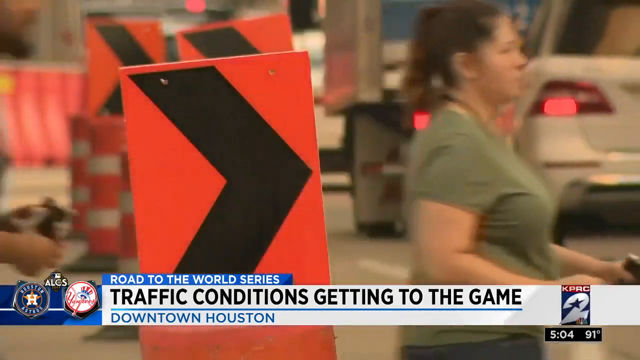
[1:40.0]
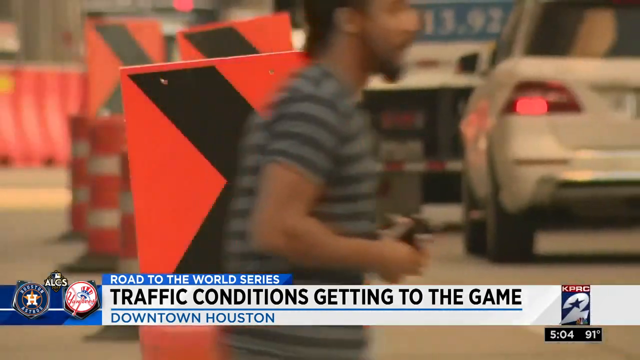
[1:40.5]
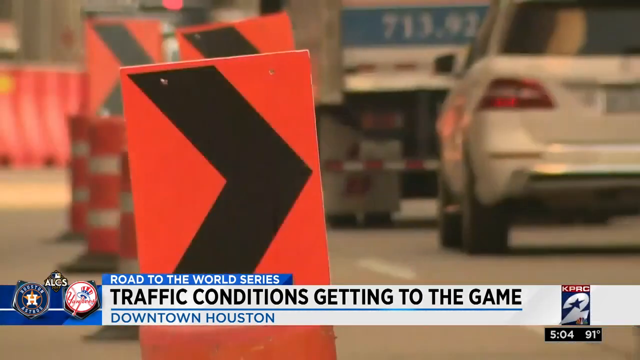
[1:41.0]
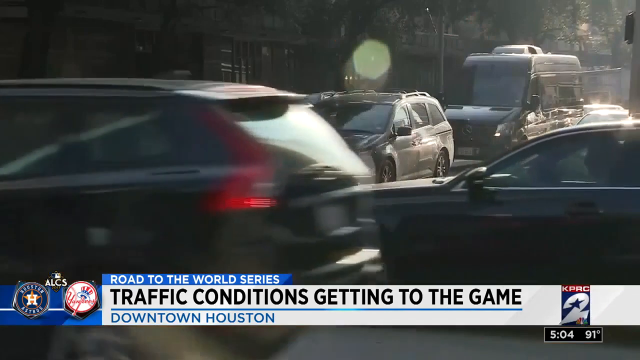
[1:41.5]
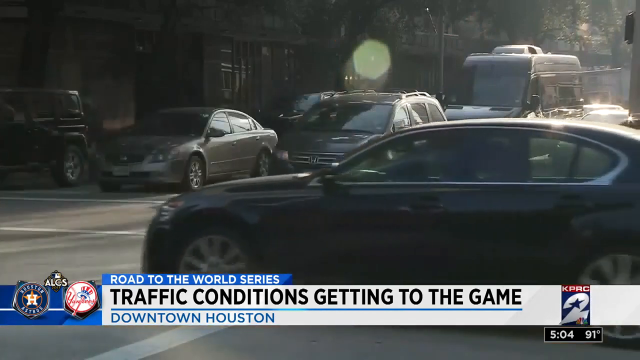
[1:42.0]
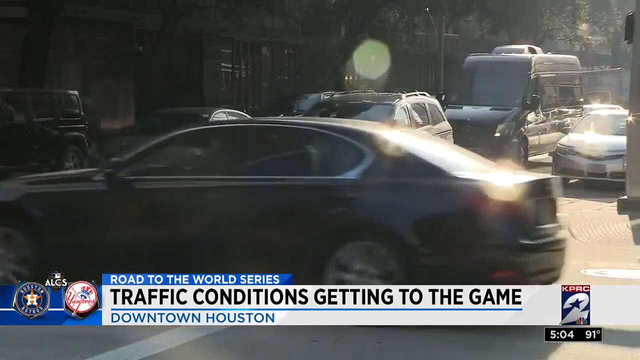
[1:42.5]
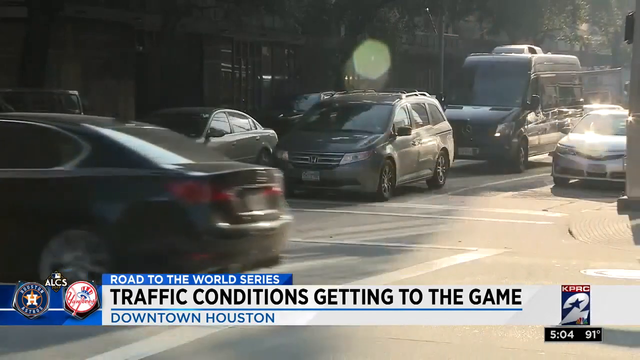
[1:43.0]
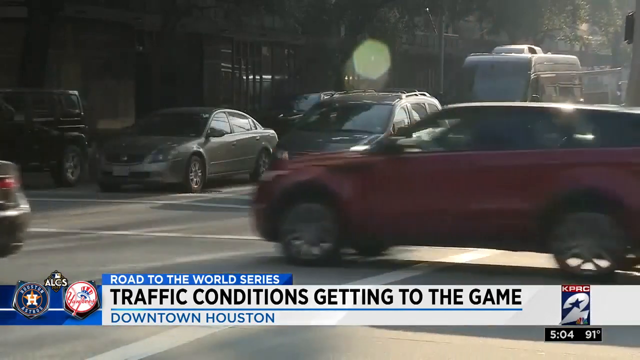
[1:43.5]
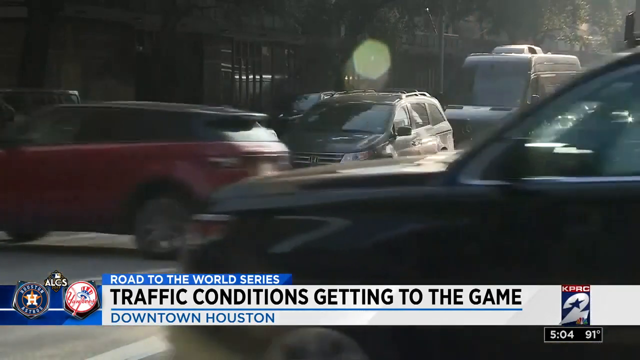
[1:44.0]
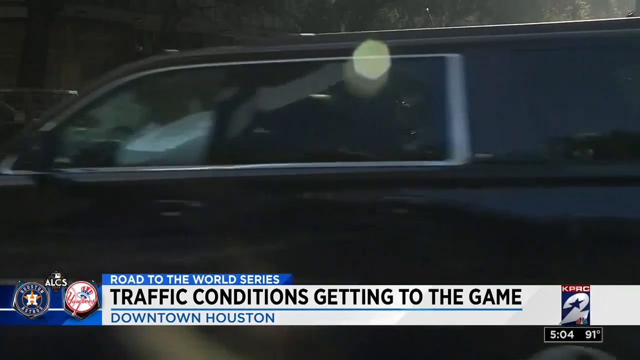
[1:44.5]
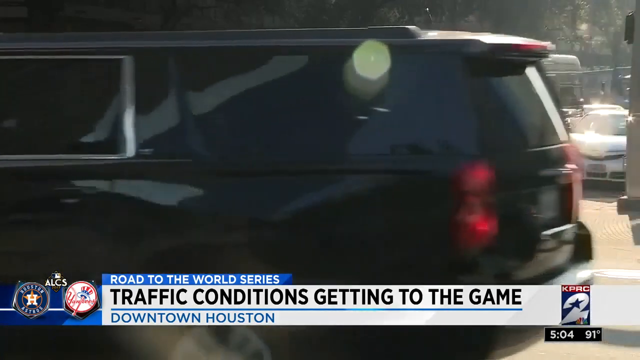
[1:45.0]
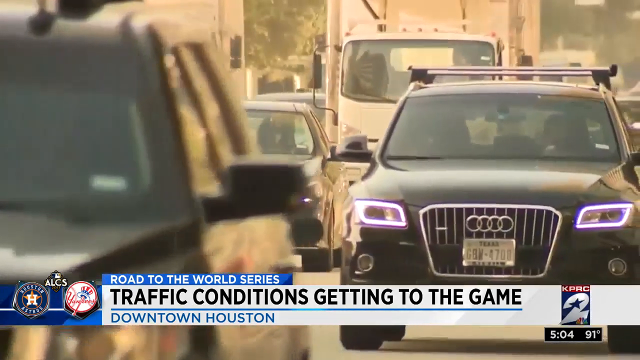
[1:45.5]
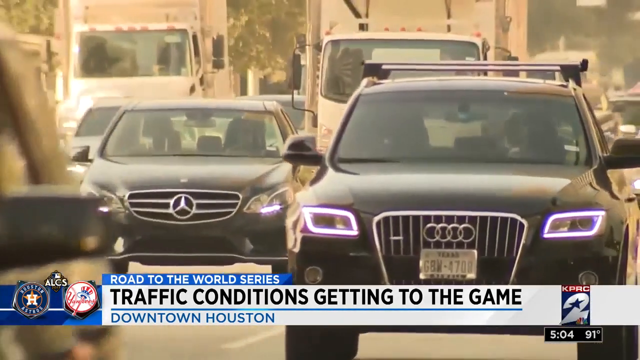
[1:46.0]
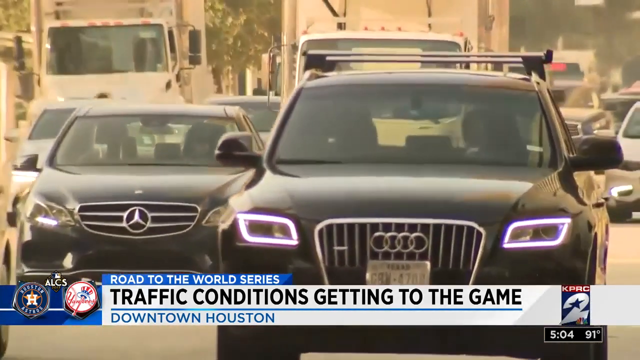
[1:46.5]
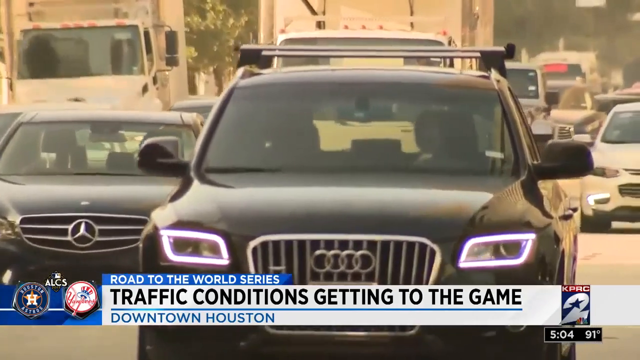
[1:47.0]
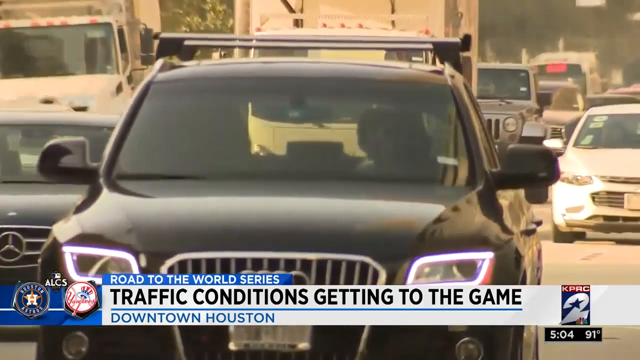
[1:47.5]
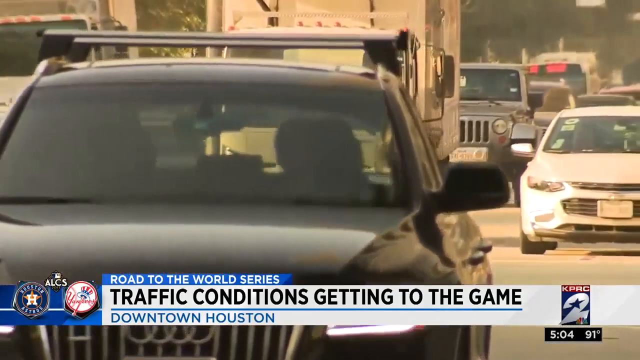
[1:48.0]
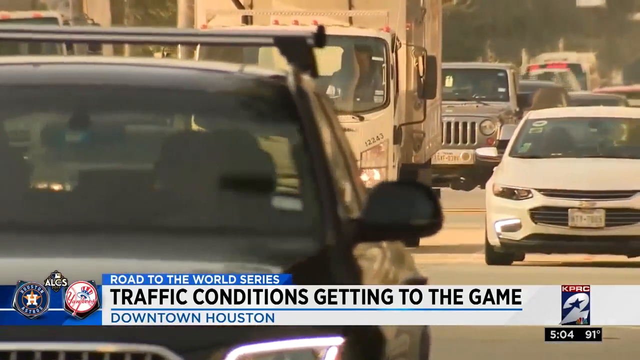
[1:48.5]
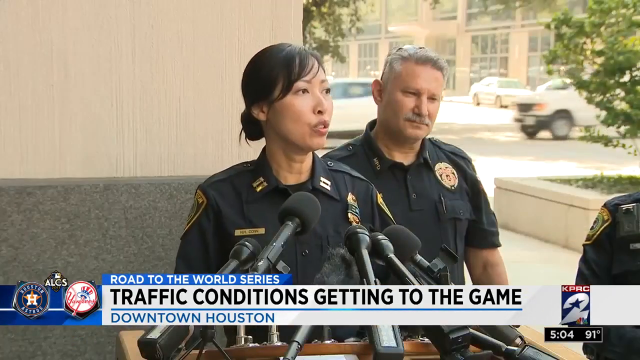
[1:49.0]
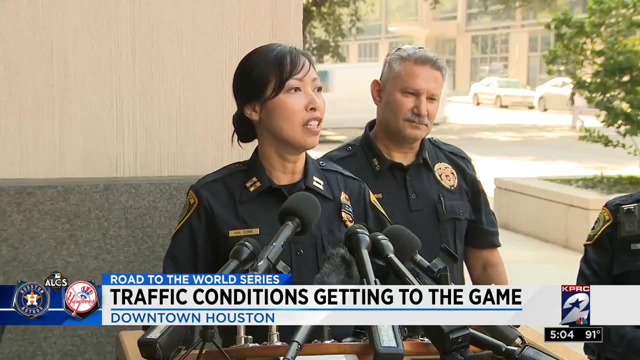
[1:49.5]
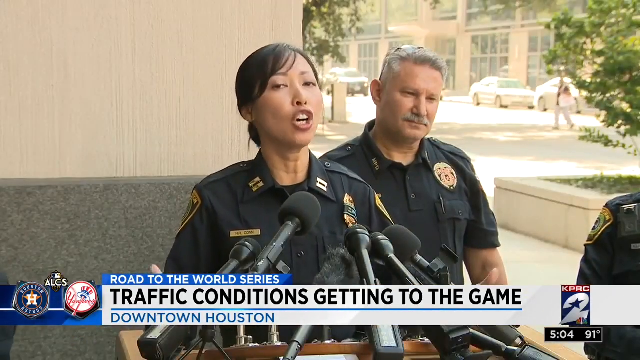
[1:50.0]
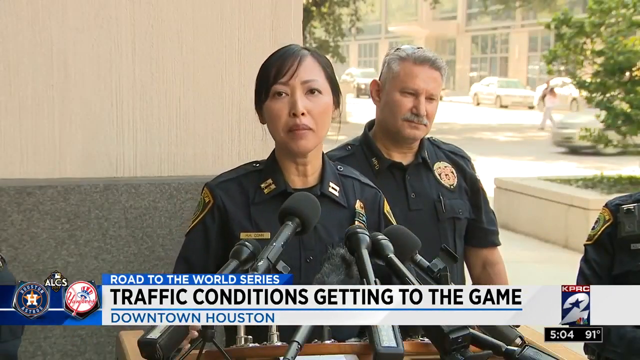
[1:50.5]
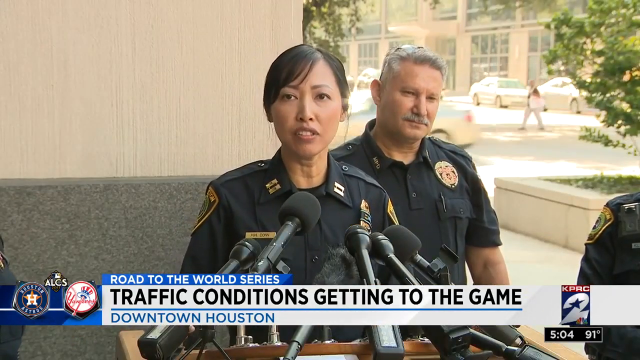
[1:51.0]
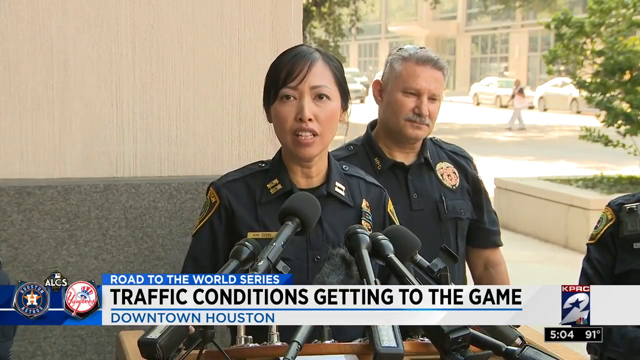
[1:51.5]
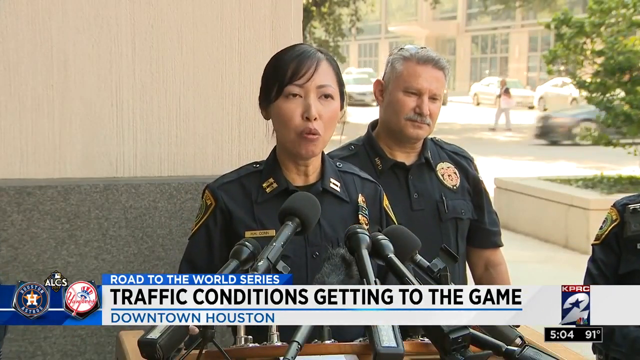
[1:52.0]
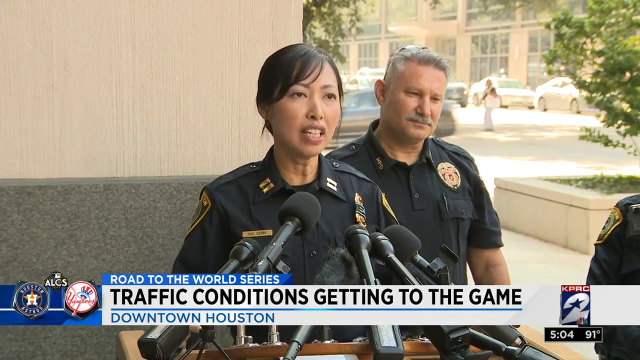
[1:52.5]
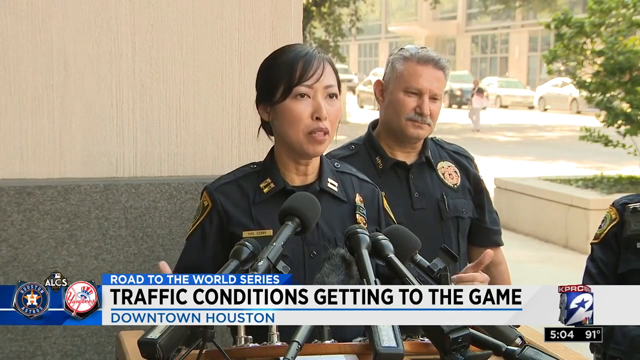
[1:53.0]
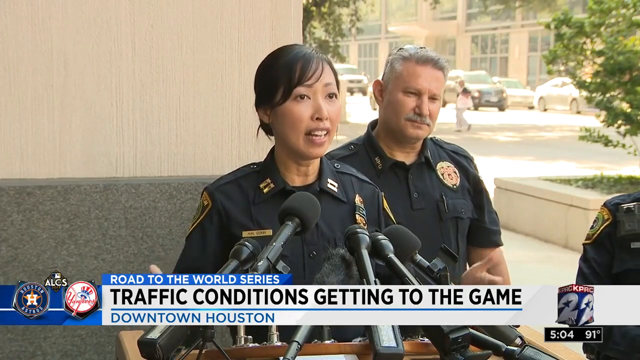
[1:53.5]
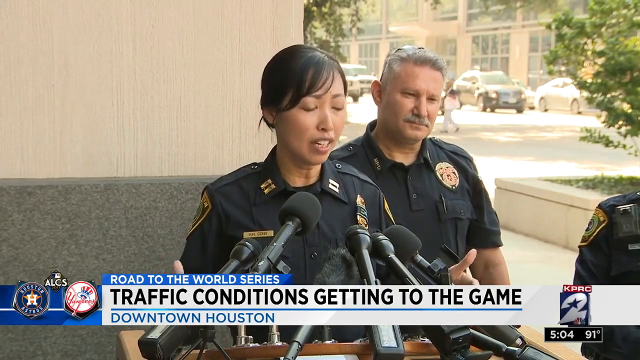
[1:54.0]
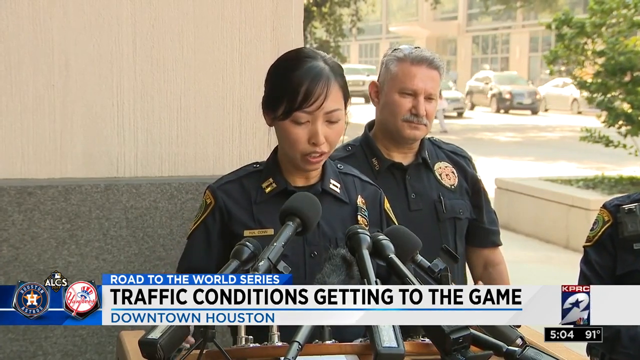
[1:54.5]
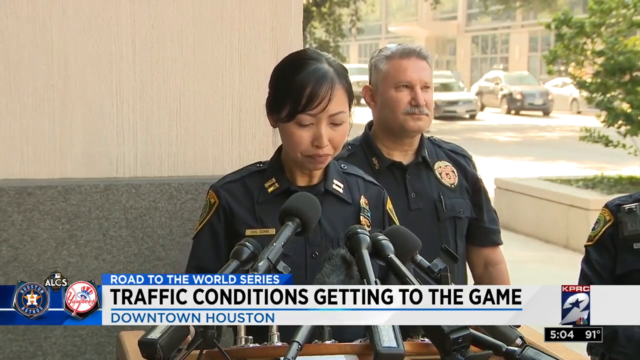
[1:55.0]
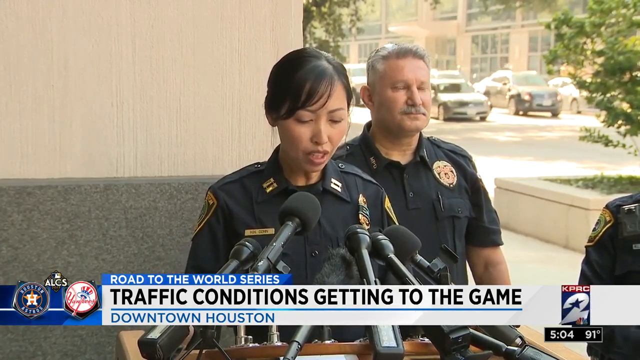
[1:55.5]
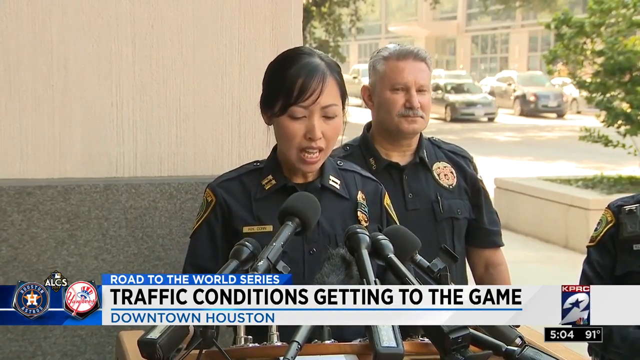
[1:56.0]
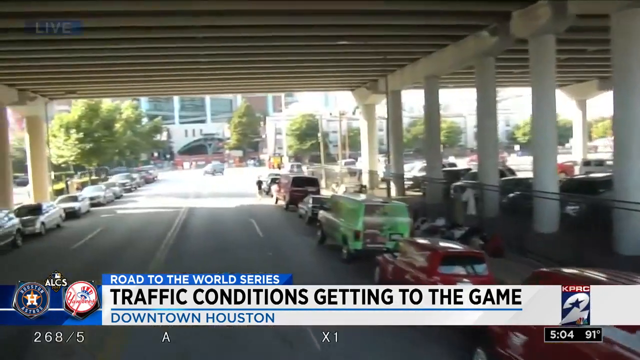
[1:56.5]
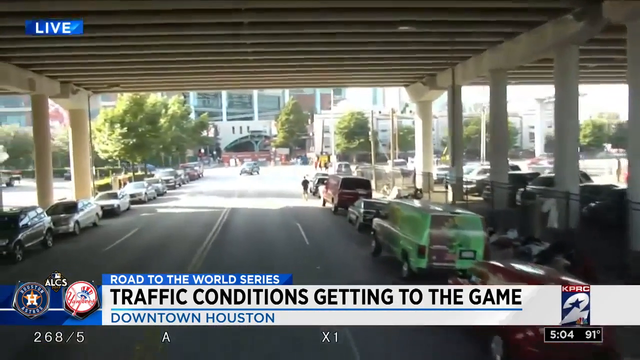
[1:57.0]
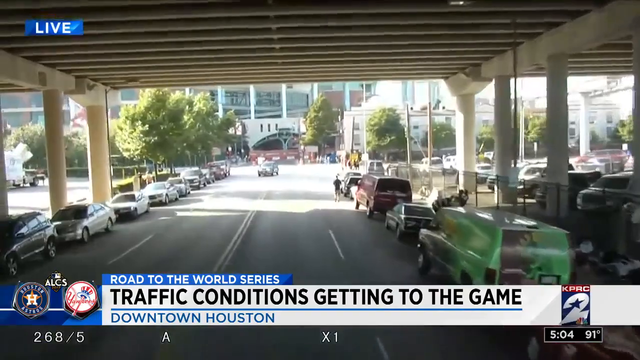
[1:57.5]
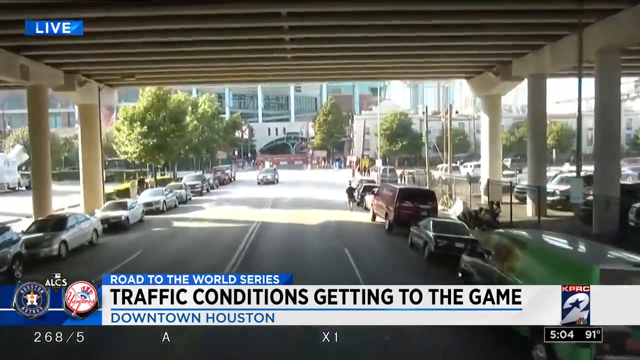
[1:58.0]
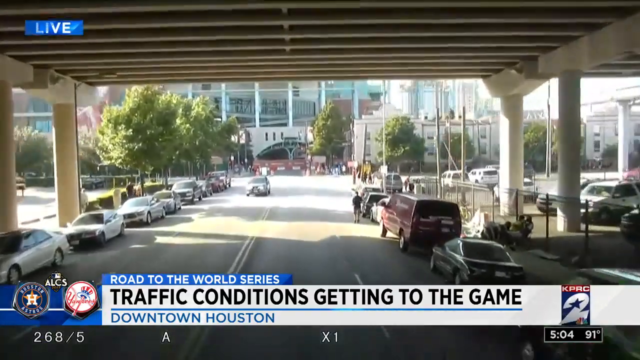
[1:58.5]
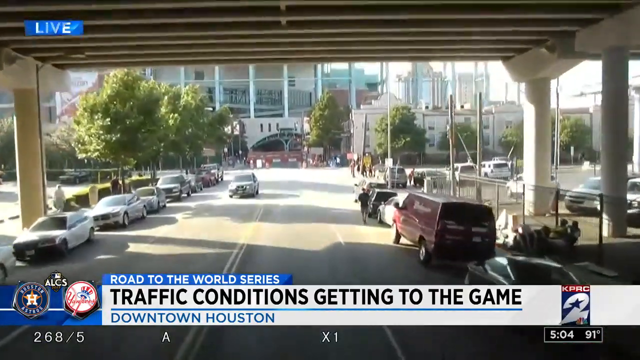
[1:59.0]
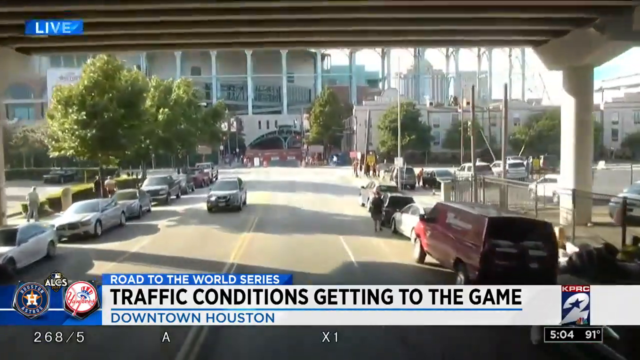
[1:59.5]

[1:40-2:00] A black arrow points to the right as a lady crosses the road, followed by a gentleman. The view pans away to show heavy traffic, with the ticker at the bottom reading "traffic conditions get into the game". Vehicles are stopped on the road while others advance from the right of the screen to the left. A different shot shows oncoming vehicles, including a Mercedes, an Audi and two white vans; the traffic goes on for quite a while, but all the vehicles move forward. A white car follows. The video cuts back to the press conference, where the Asian female officer is now speaking and the male officer who spoke before stands behind her, to her right. Behind him a white van comes from the right of the screen and somebody crosses the road, and traffic comes to a standstill behind them. While she is still talking, the video cuts to the area under a bridge, with traffic parked on either side of the bridge and trees and buildings up ahead. It is a sunny day. The camera is in a vehicle moving under the bridge.